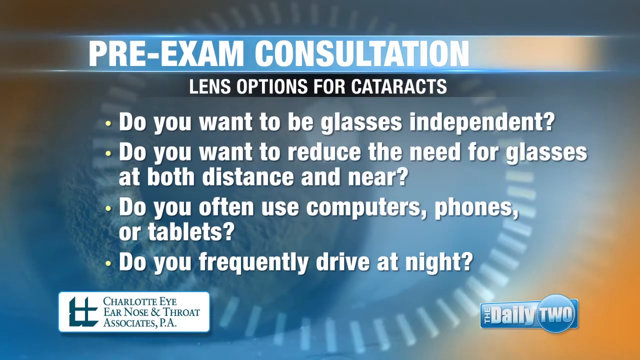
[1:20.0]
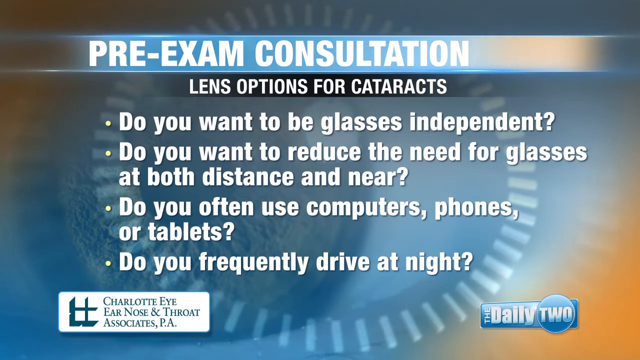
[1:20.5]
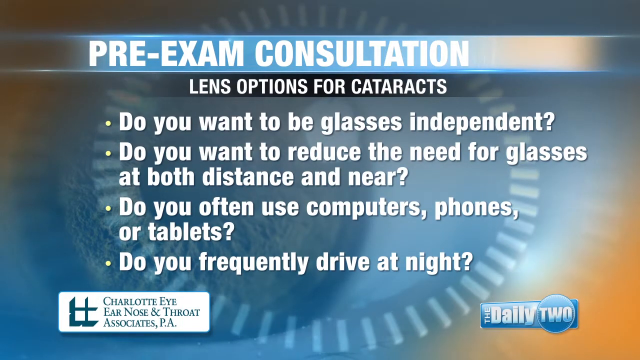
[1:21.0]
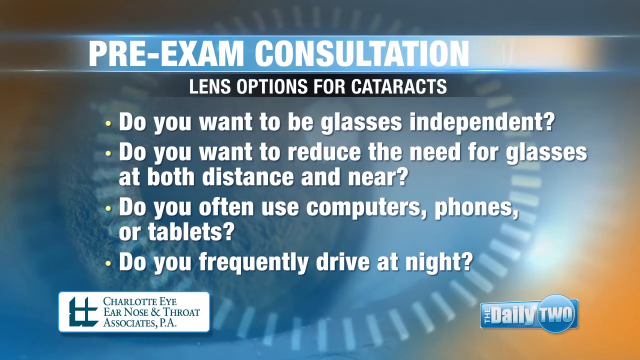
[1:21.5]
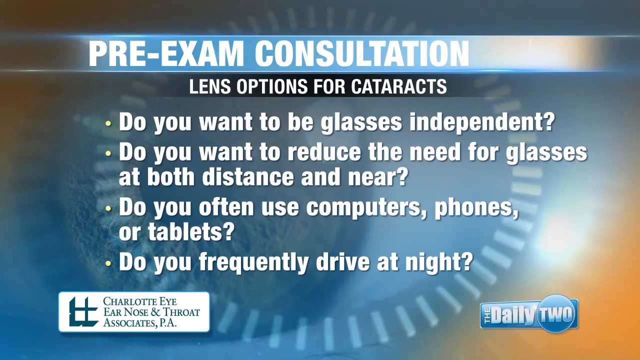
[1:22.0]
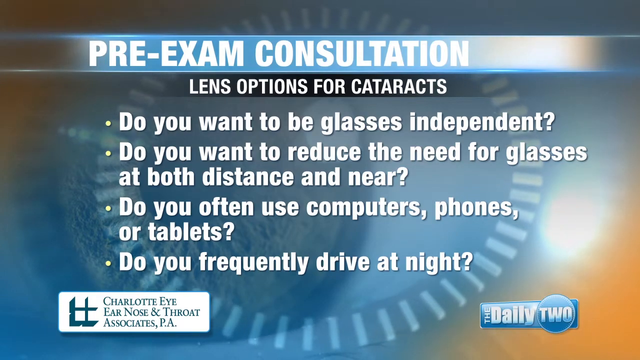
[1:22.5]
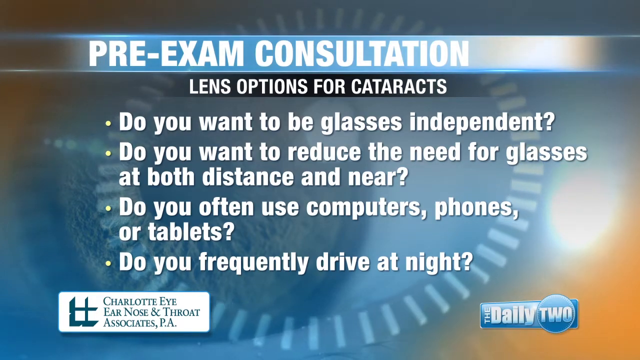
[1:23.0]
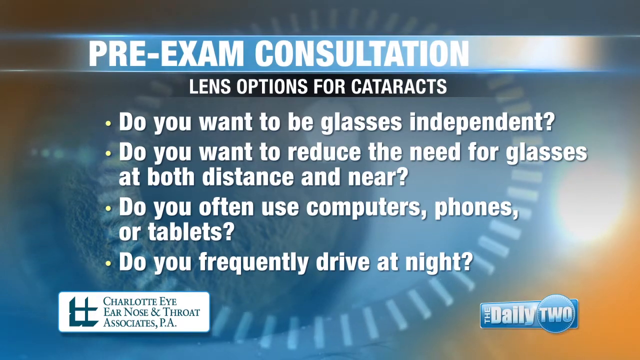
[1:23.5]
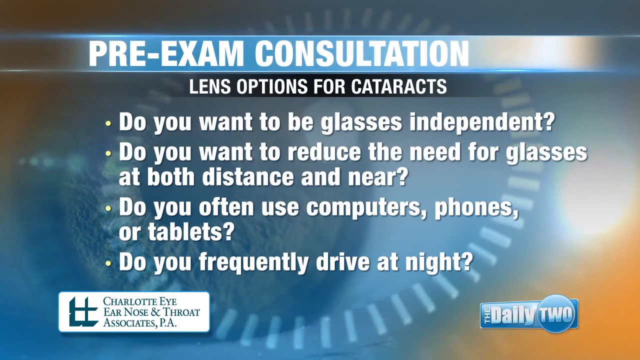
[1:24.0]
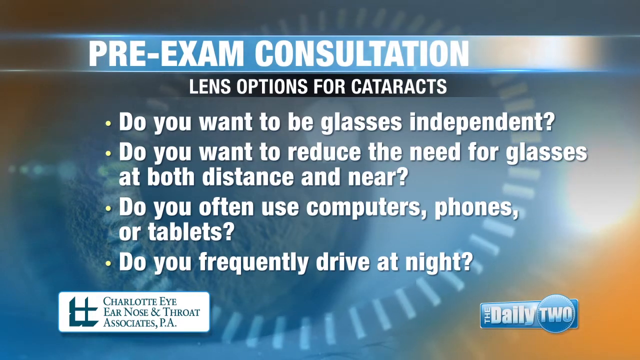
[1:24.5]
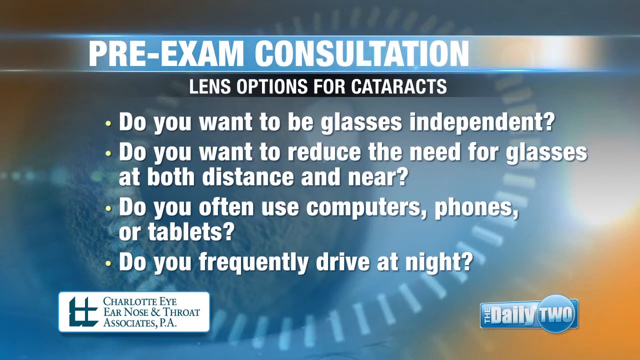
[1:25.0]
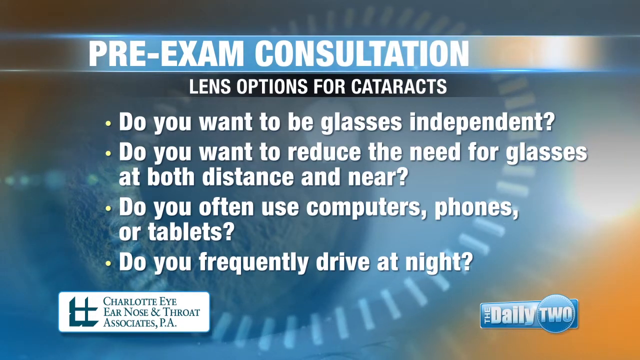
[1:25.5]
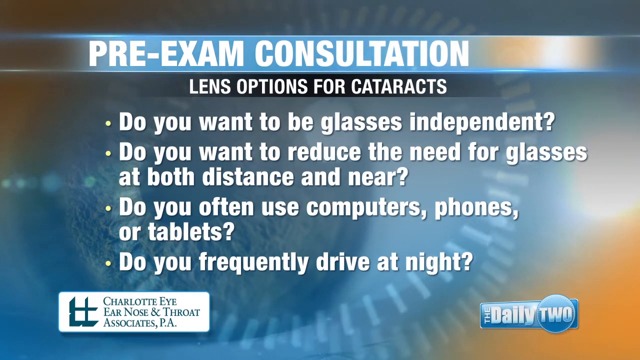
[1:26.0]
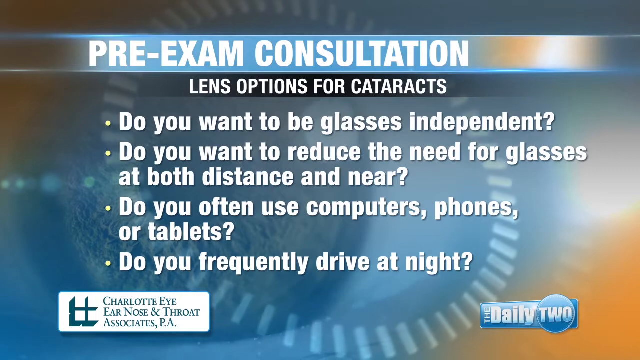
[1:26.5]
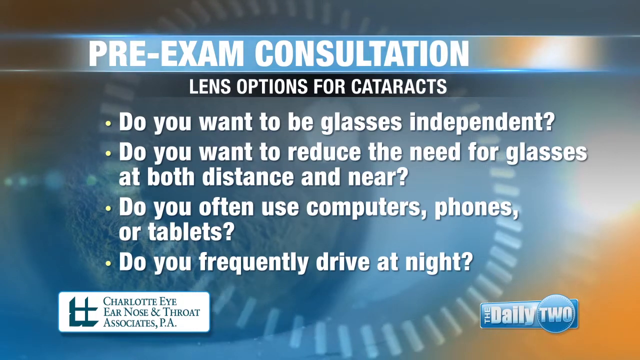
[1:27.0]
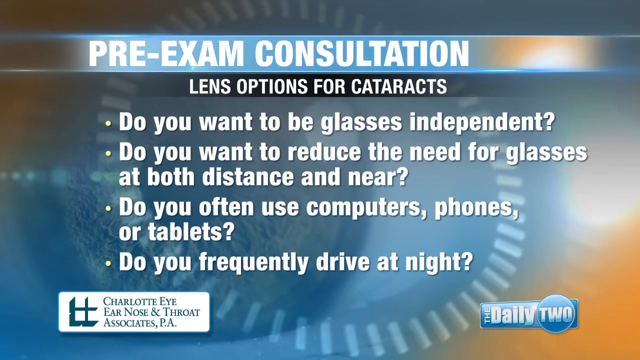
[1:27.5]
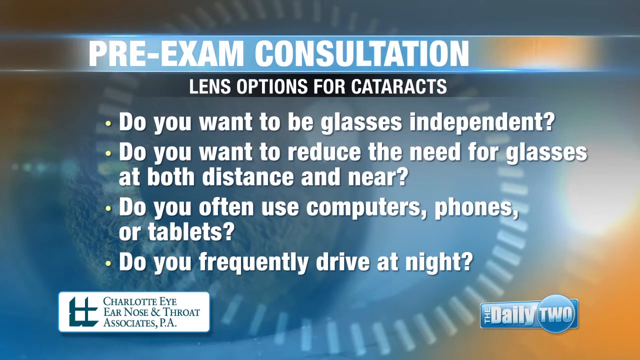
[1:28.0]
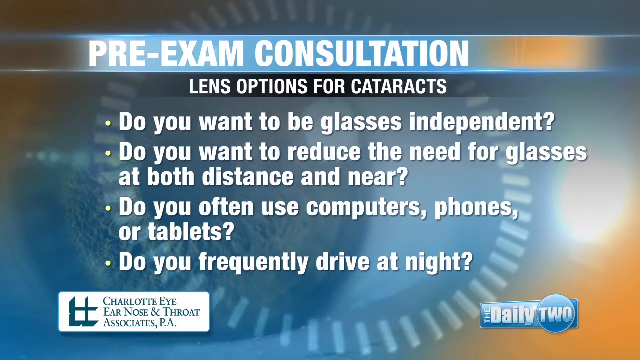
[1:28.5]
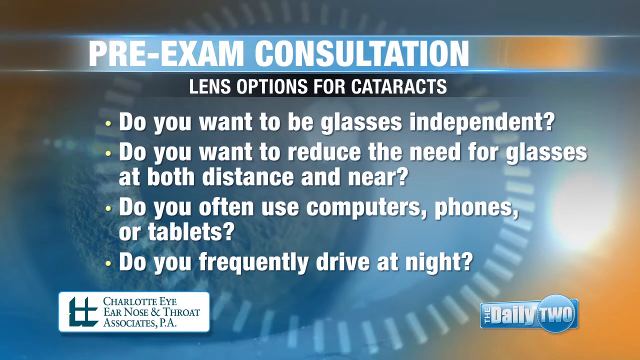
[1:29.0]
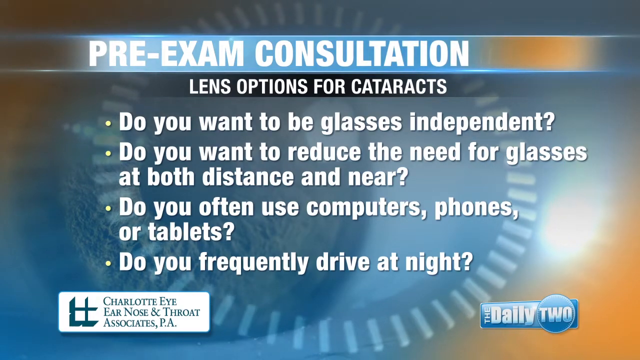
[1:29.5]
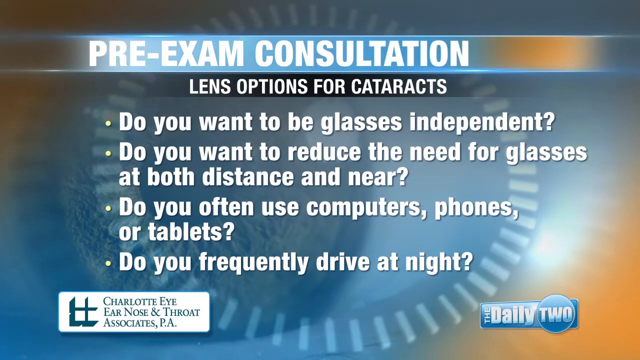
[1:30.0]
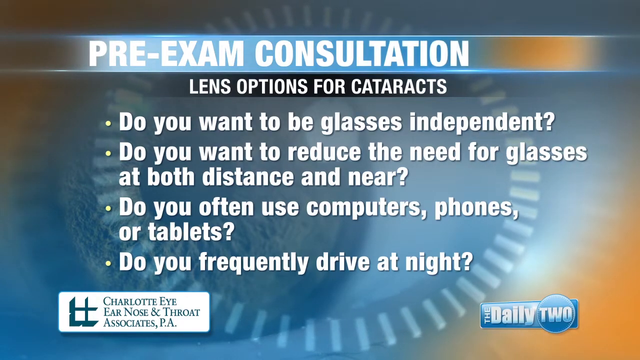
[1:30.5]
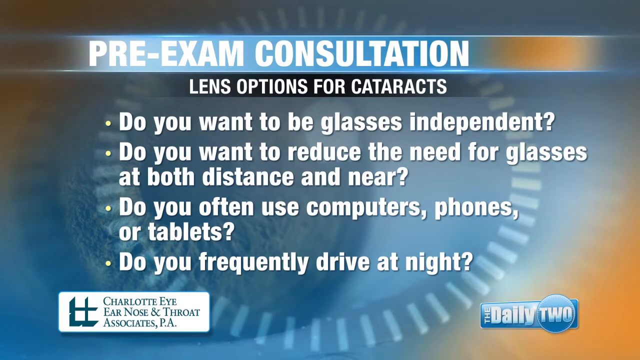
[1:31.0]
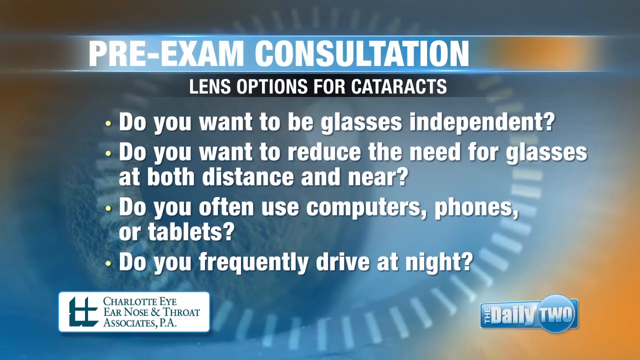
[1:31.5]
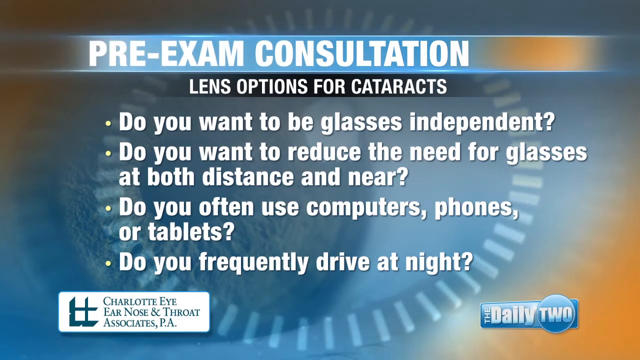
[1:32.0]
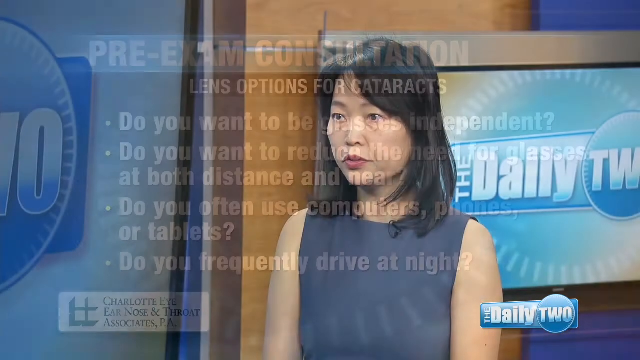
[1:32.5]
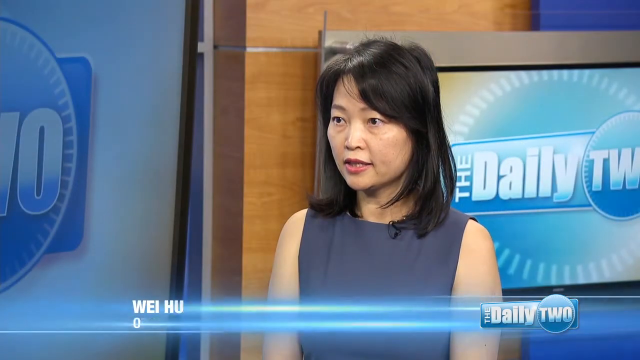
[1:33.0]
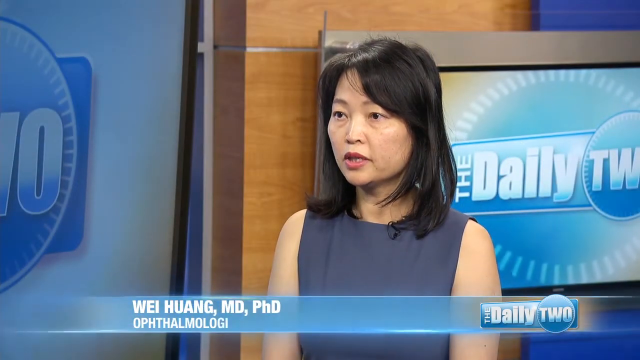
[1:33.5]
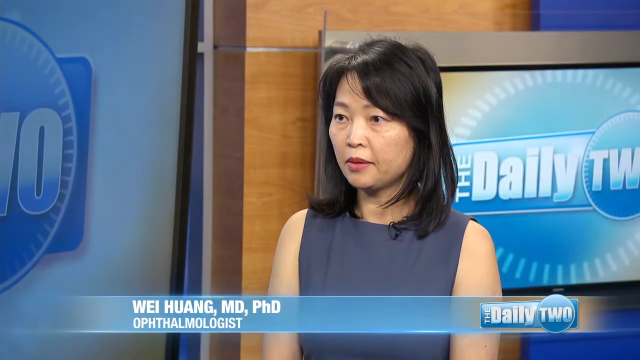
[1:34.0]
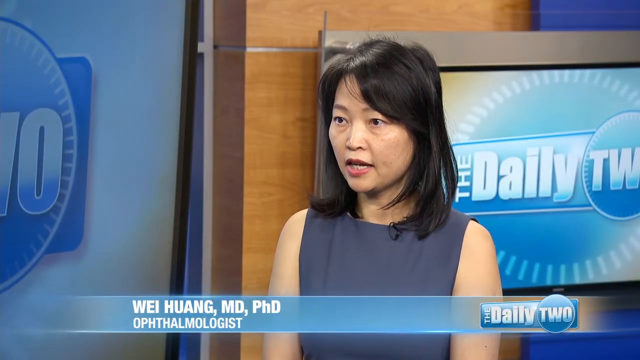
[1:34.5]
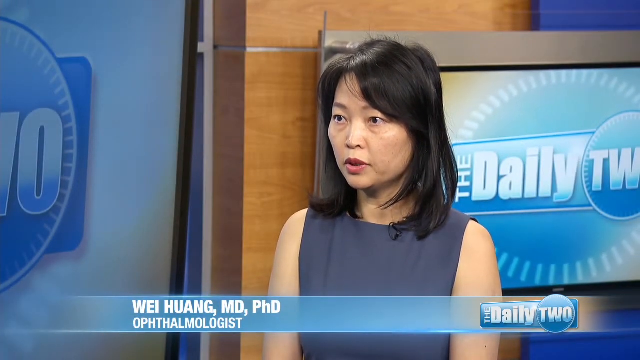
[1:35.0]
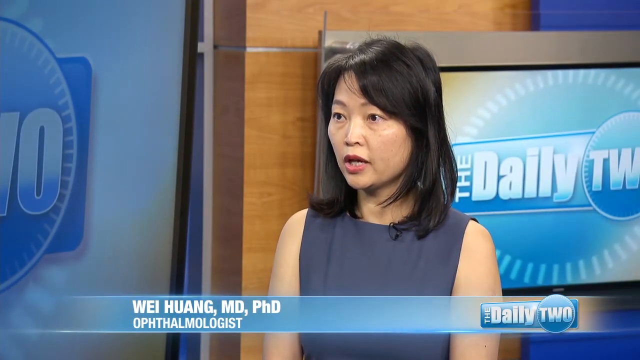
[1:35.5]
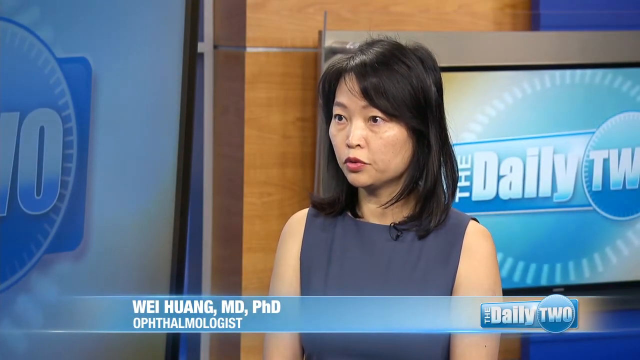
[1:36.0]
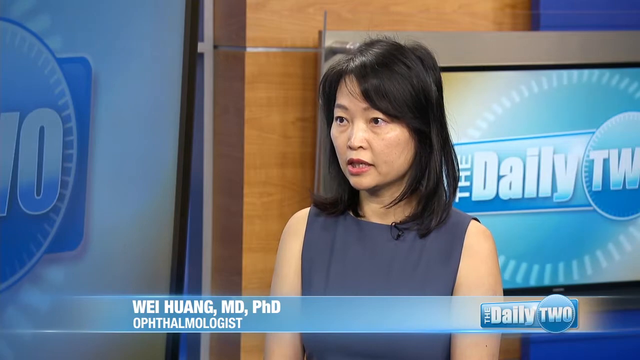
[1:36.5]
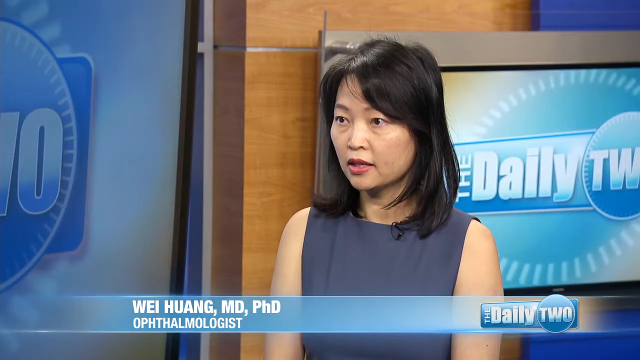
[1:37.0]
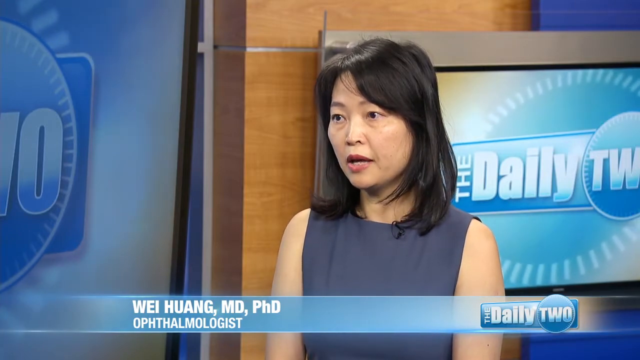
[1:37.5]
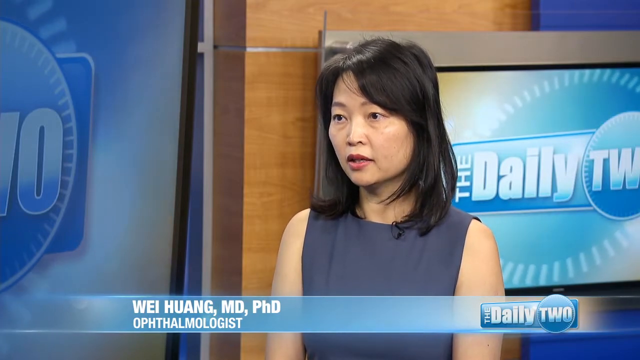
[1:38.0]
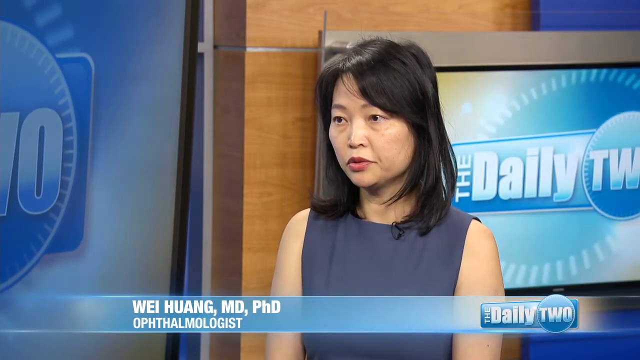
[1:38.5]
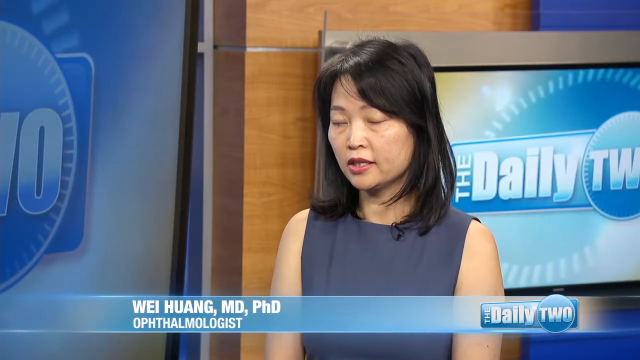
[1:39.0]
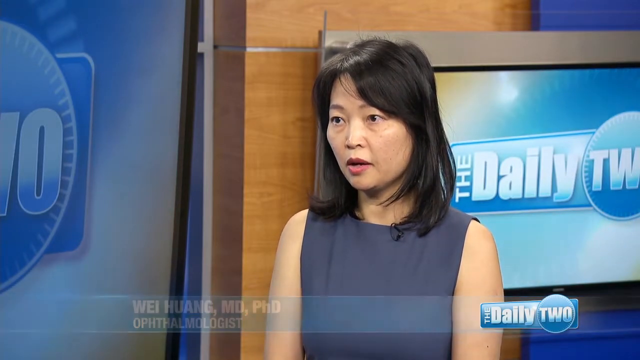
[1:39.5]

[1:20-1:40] A slide reads "pre-exam consultation" and "lens option for cataracts", followed by the questions "Do you want to be glasses independent?", "Do you want to reduce the need for glasses at both distance and near?", "Do you often use computers, phones, or tablets?" and "Do you frequently drive at night?" The slide stays up for quite some time. Then the video returns to the two women speaking, focusing on the woman in the sleeveless gray dress, labeled "Wei Huang, MD, PhD" and "ophthalmologist". She wears pinkish, light reddish, blush-colored lipstick. Text also reads "Charlotte Eye Ear, Nose and Throat Associates, P.A.", possibly where she works.